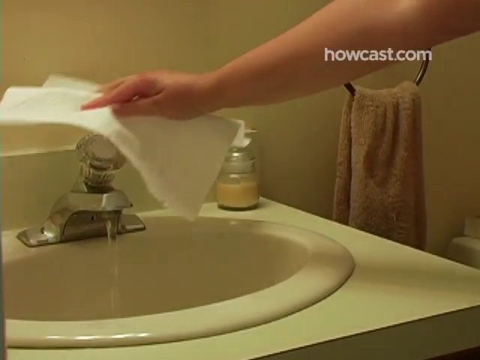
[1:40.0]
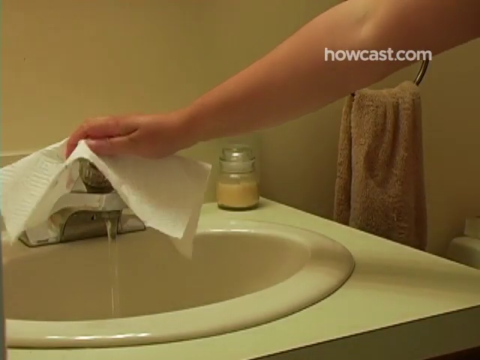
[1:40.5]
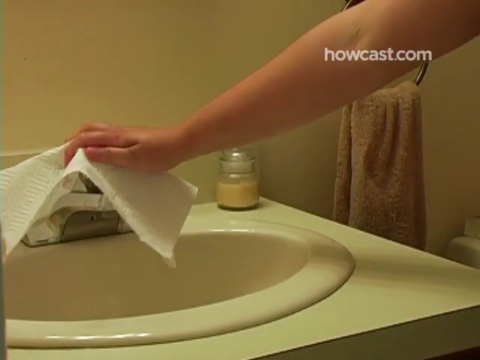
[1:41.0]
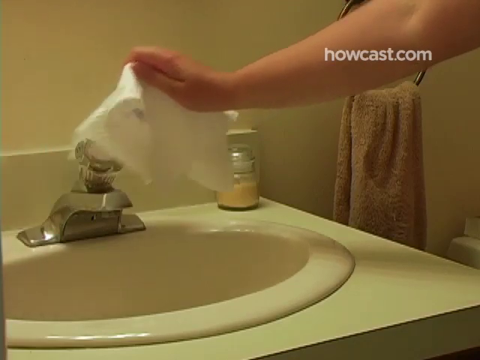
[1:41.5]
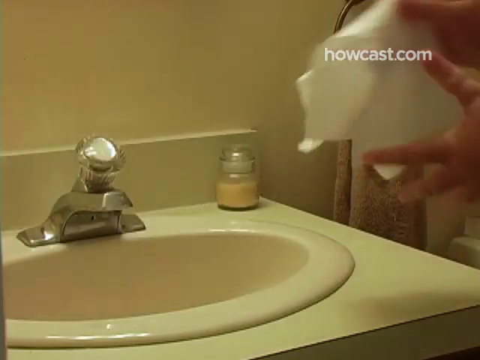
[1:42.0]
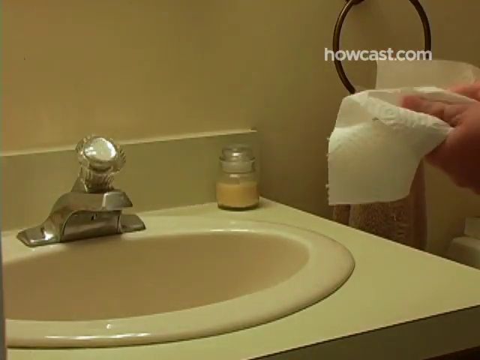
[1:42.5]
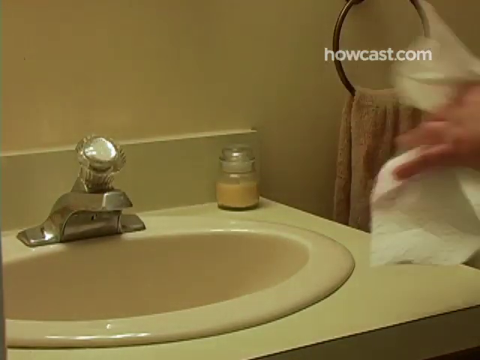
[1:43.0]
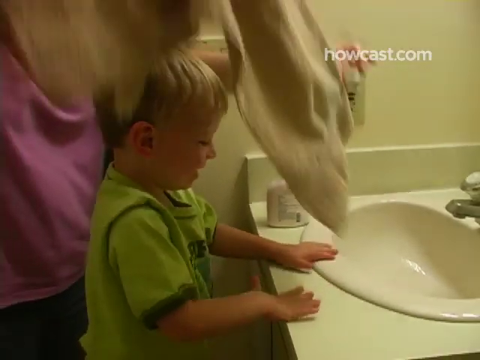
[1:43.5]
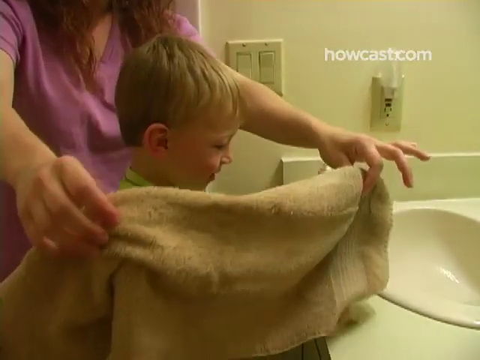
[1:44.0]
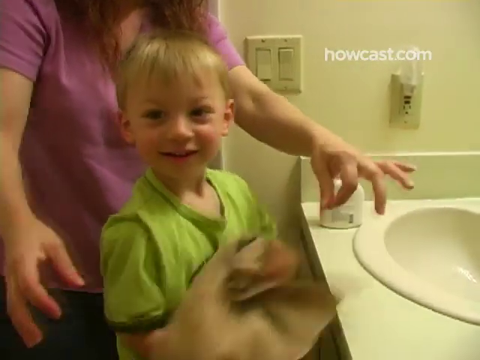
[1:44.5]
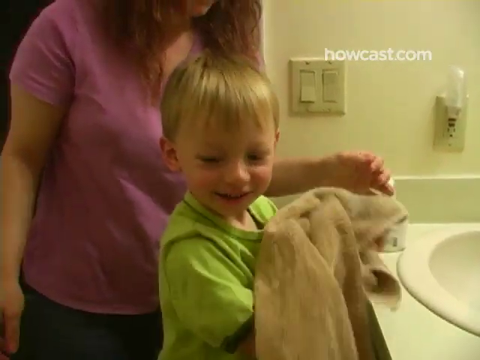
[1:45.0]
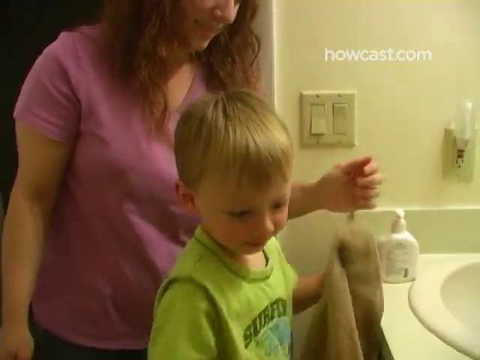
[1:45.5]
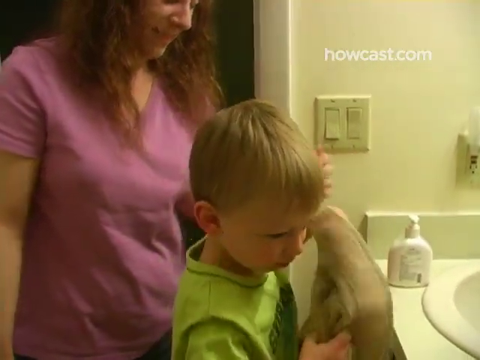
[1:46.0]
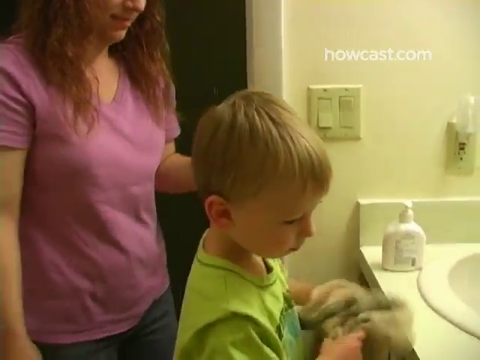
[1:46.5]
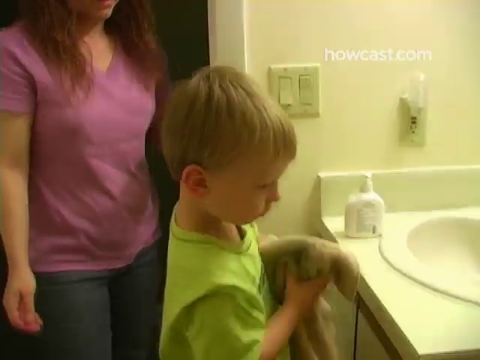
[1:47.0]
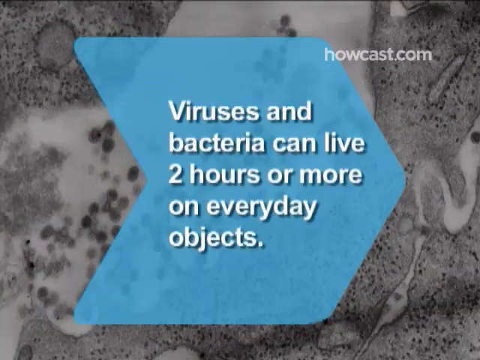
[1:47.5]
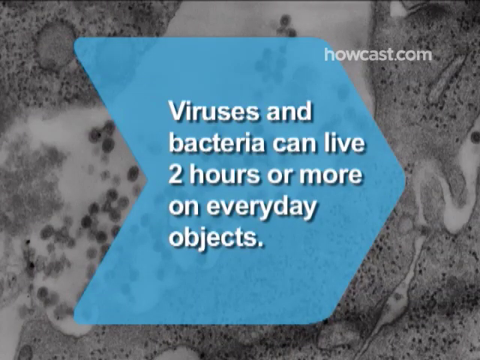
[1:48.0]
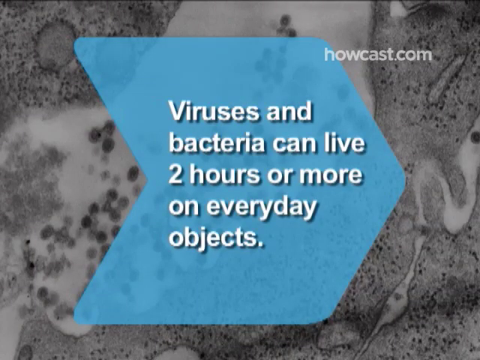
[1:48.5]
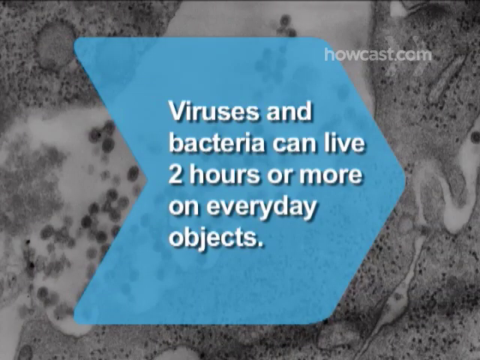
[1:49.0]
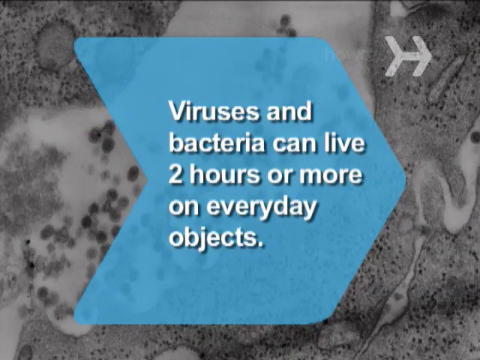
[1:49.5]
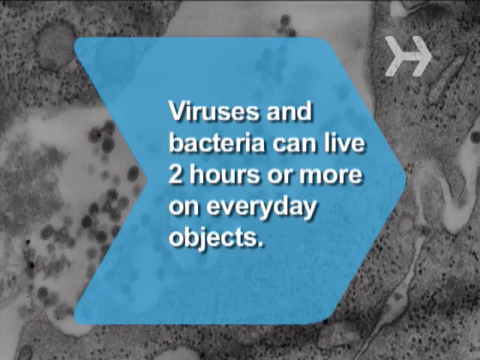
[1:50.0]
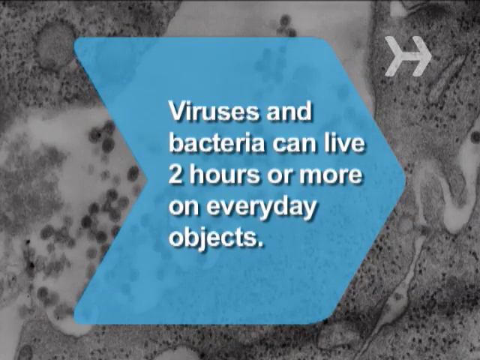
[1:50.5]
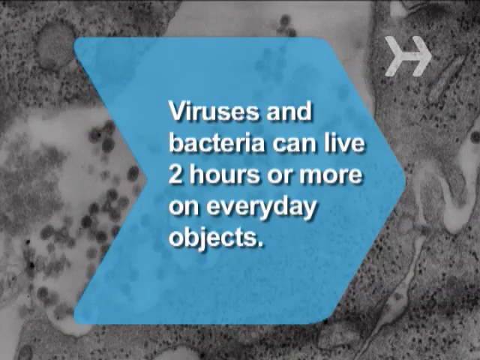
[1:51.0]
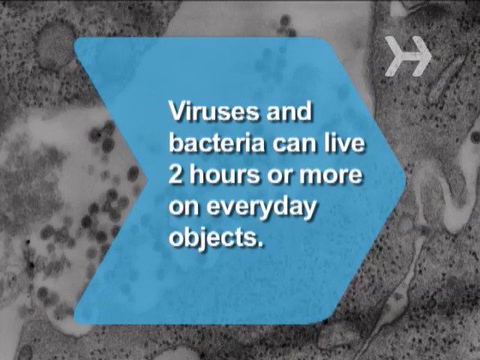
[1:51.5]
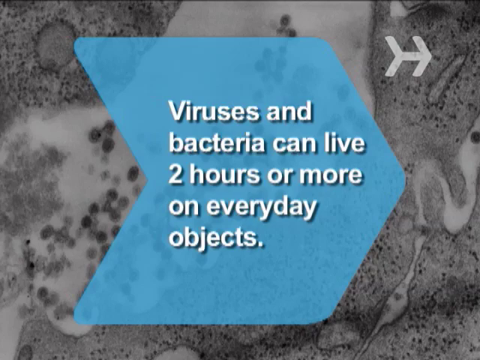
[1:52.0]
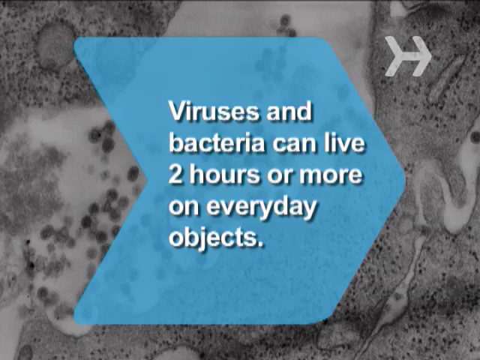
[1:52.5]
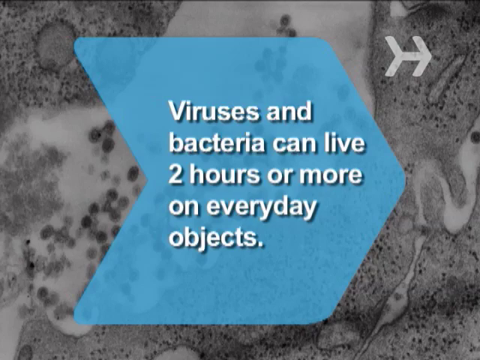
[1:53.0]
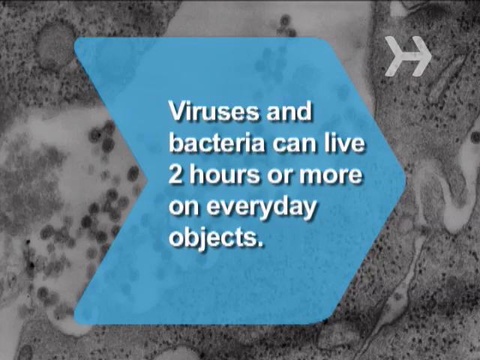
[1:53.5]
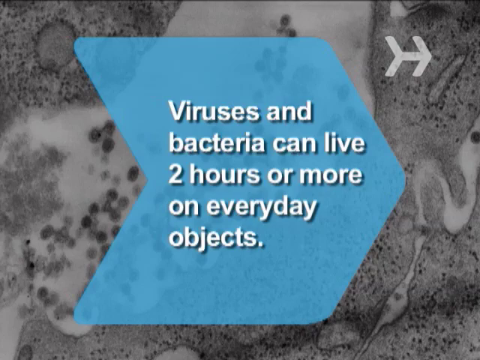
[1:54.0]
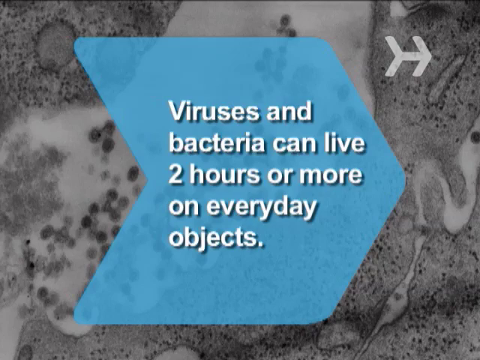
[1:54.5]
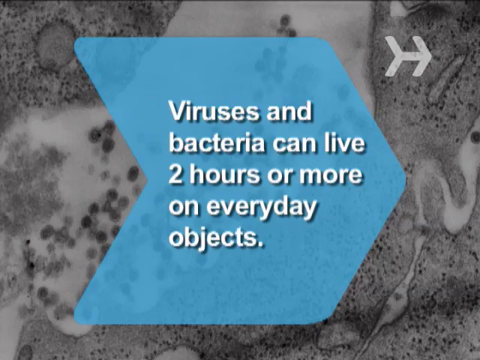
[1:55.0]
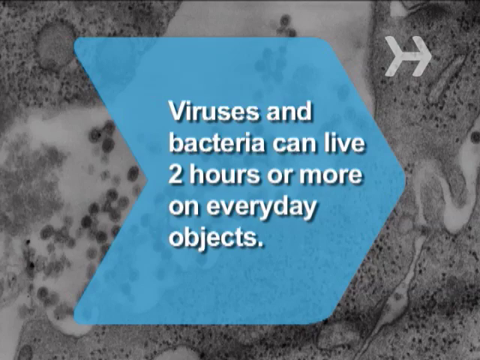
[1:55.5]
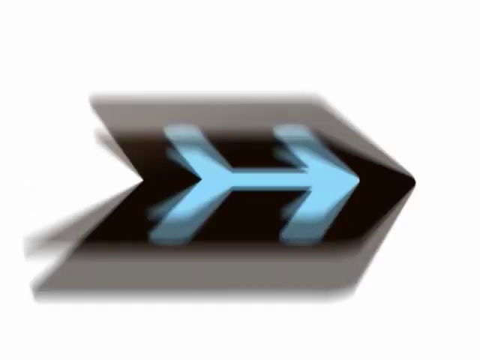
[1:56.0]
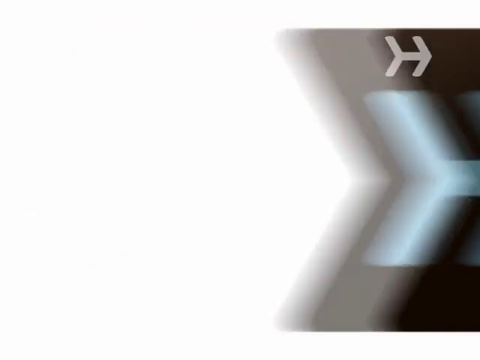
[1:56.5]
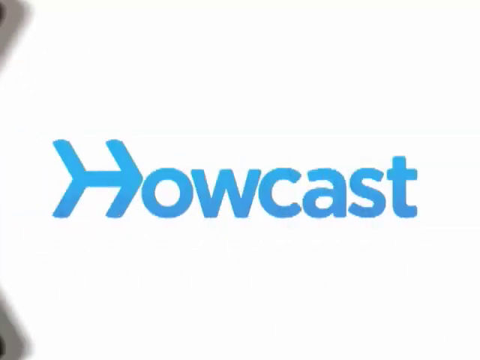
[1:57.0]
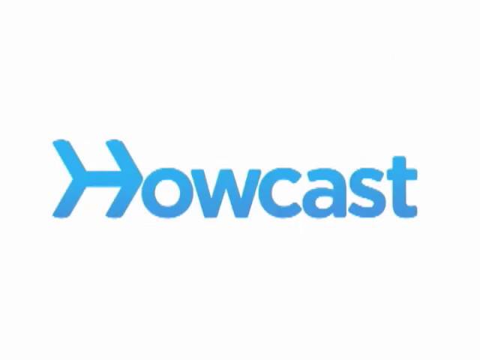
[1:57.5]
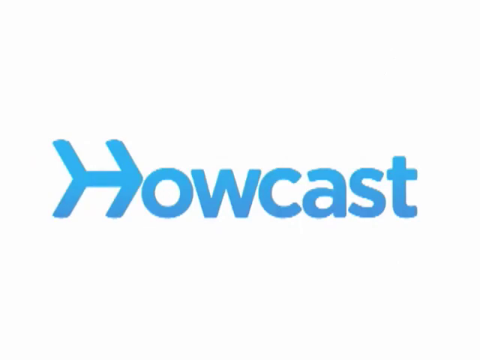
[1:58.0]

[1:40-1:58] The mother wipes off her hands with paper towels, then a cut shows her handing a hand towel to her son. He starts drying his hands. He seems pleased, and she seems pleased. The bathroom is poorly lit, with no color grading and no other light sources apparently used; the footage looks like it was shot on a smartphone.